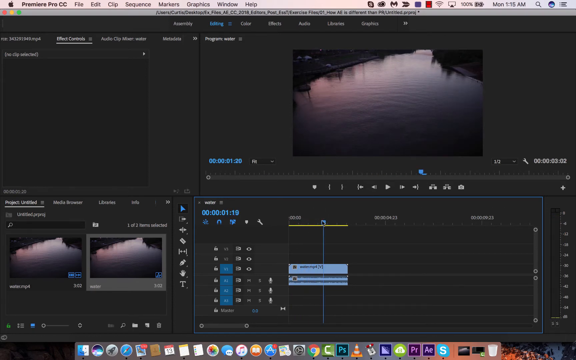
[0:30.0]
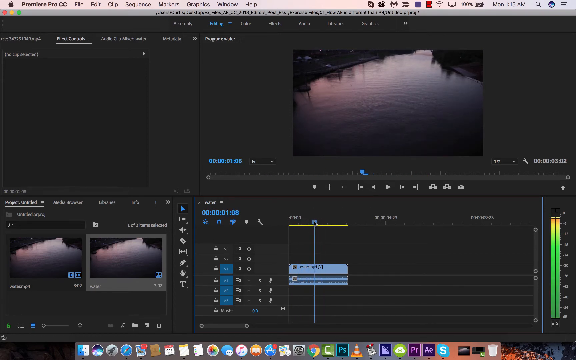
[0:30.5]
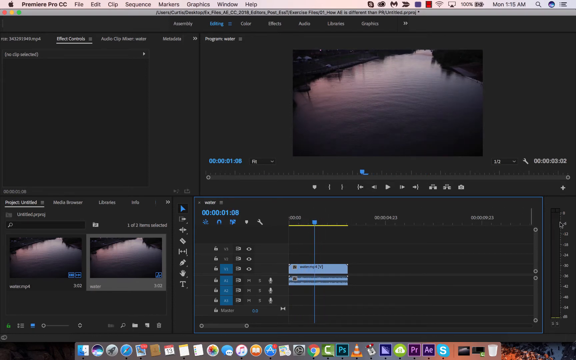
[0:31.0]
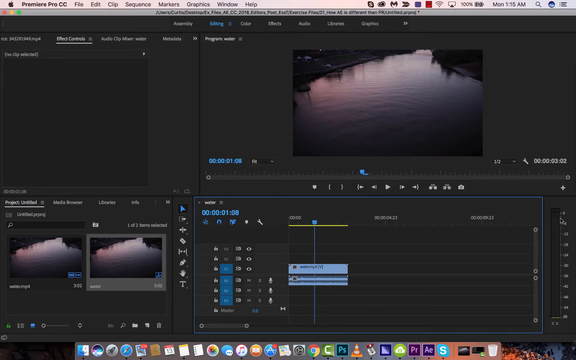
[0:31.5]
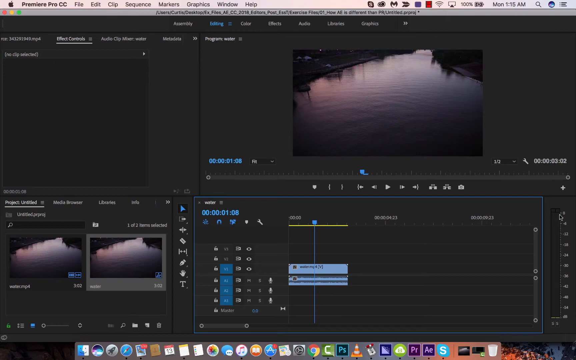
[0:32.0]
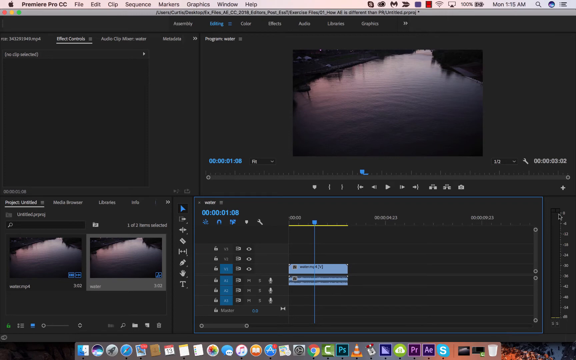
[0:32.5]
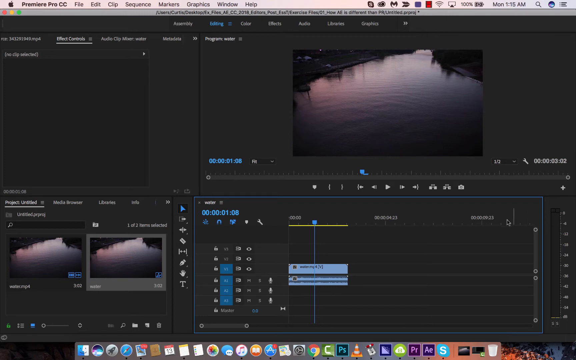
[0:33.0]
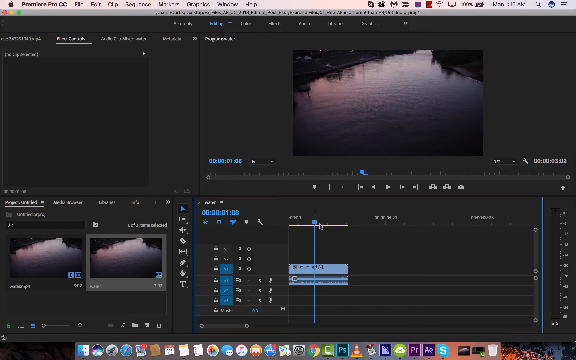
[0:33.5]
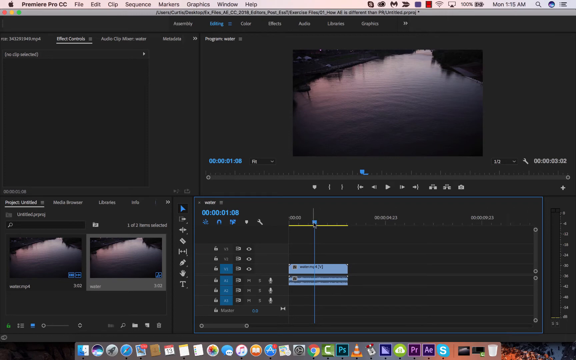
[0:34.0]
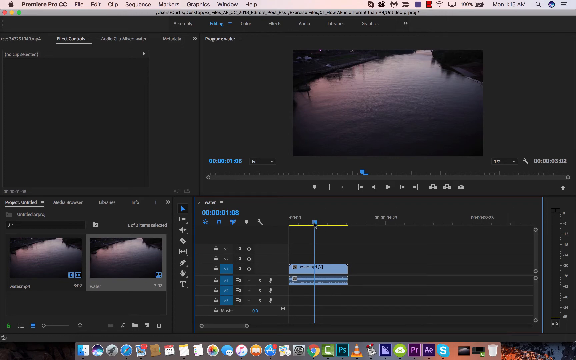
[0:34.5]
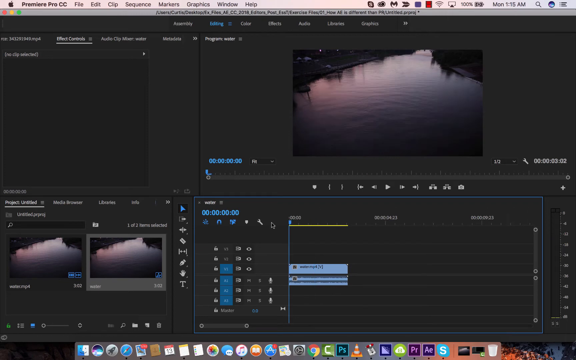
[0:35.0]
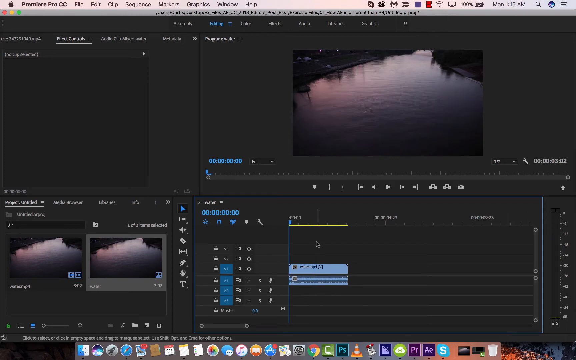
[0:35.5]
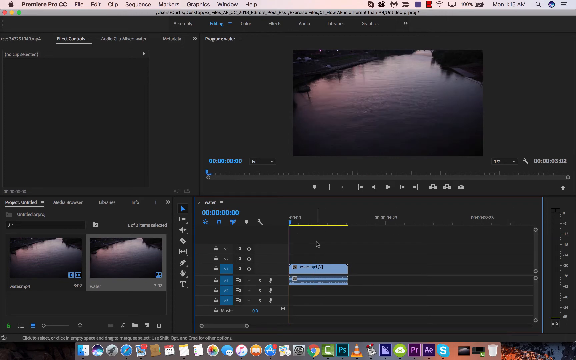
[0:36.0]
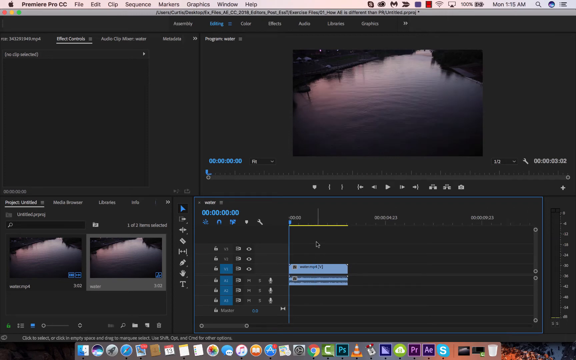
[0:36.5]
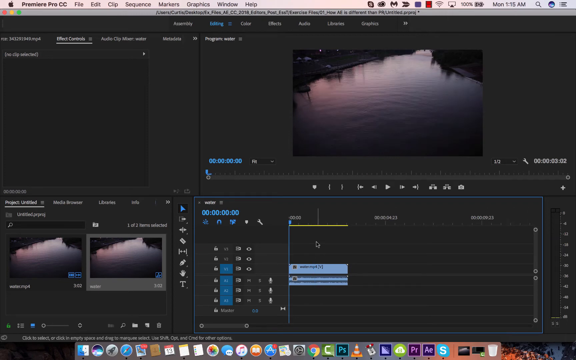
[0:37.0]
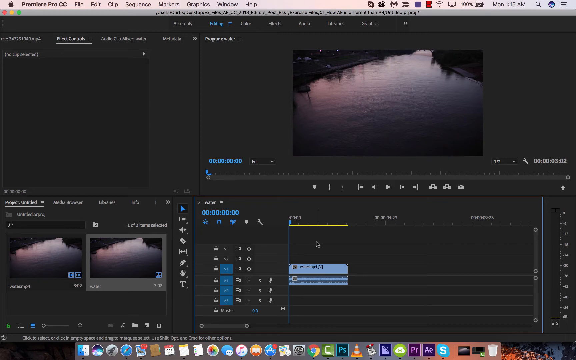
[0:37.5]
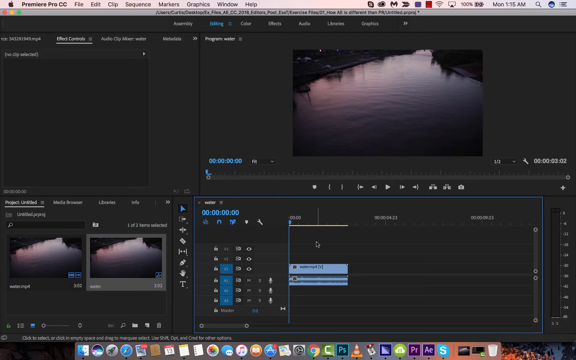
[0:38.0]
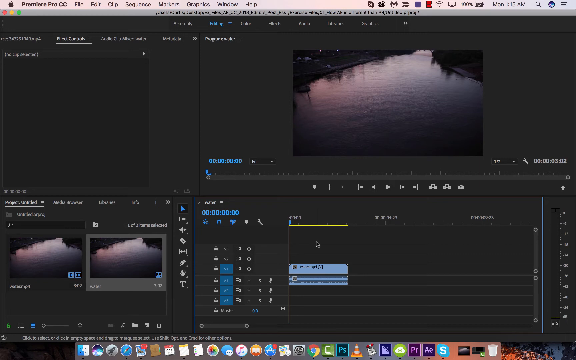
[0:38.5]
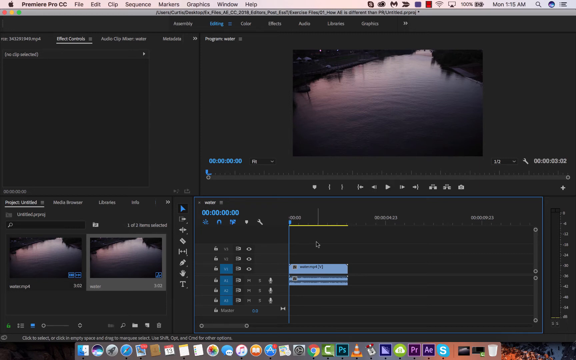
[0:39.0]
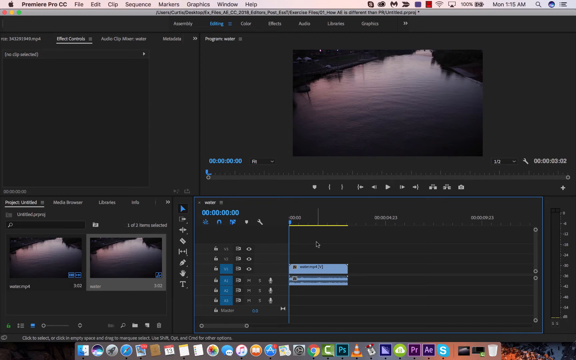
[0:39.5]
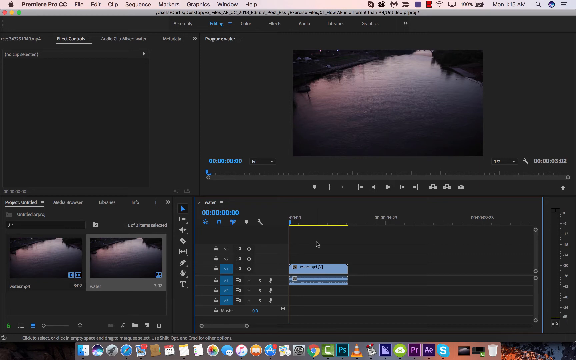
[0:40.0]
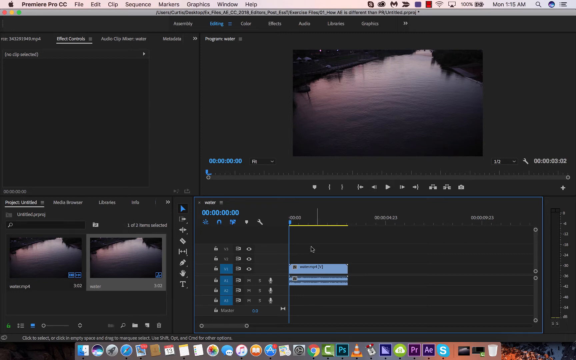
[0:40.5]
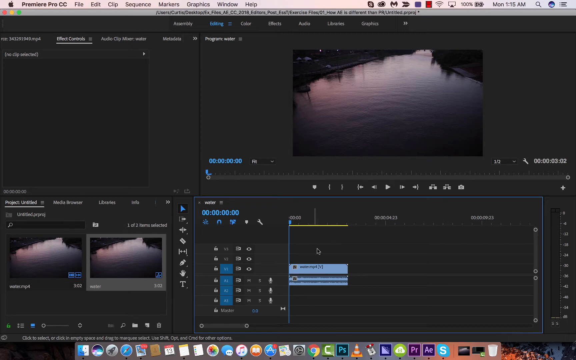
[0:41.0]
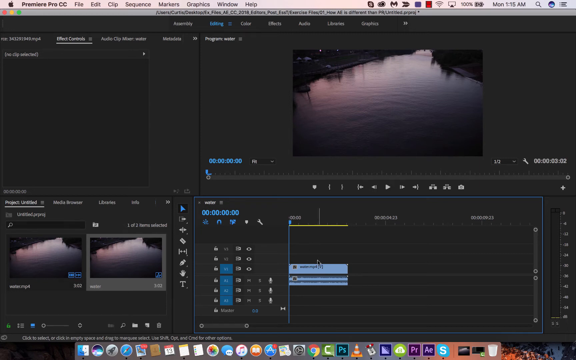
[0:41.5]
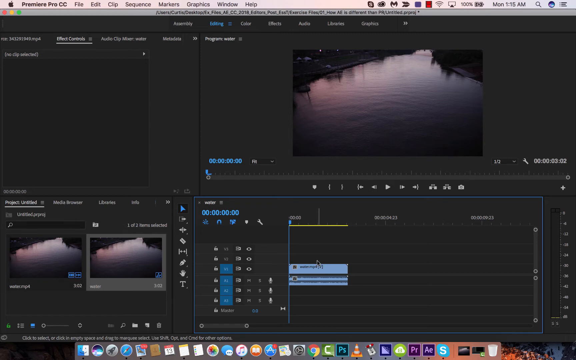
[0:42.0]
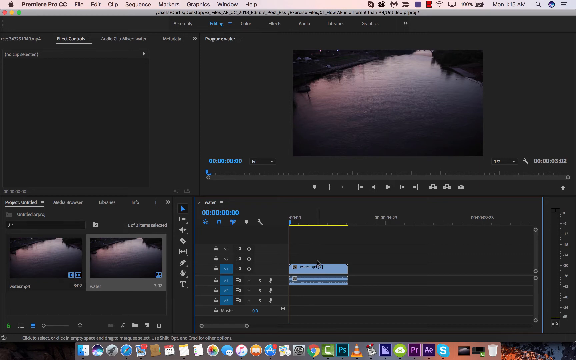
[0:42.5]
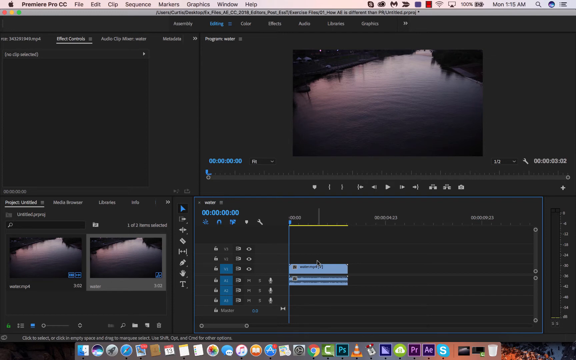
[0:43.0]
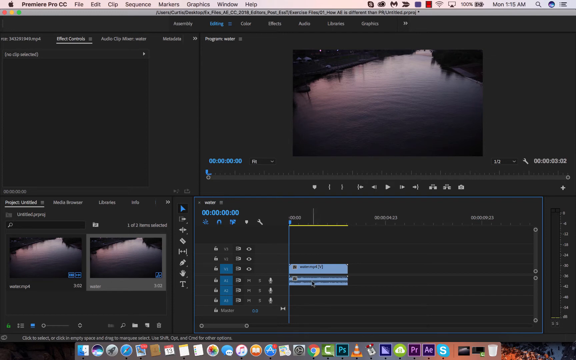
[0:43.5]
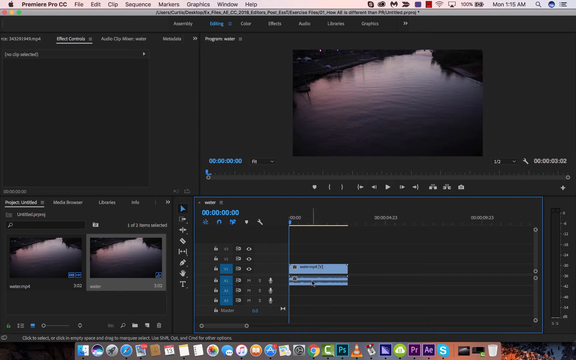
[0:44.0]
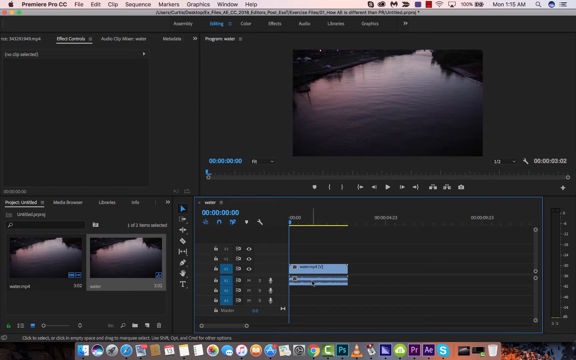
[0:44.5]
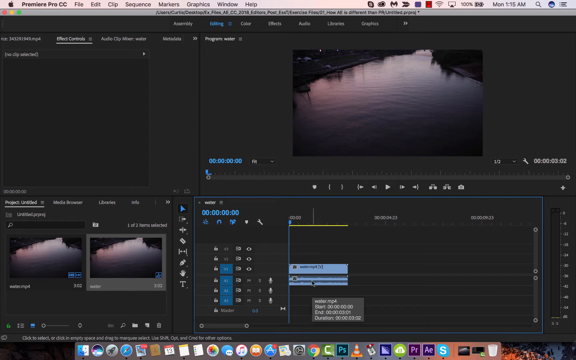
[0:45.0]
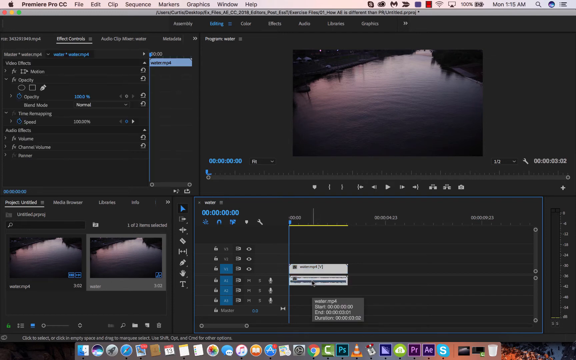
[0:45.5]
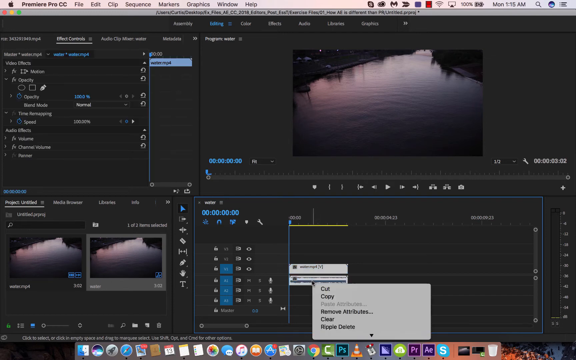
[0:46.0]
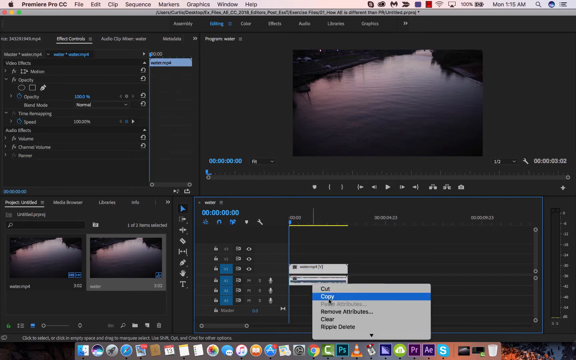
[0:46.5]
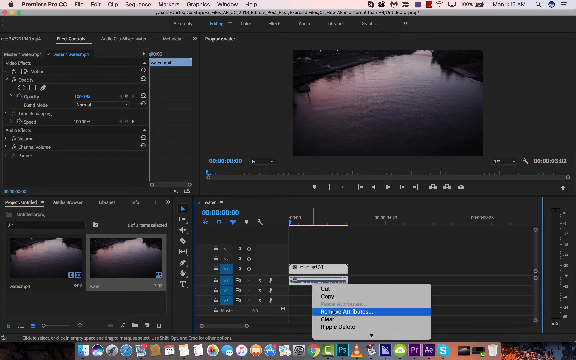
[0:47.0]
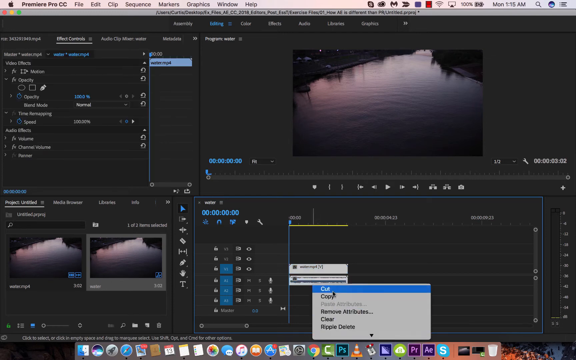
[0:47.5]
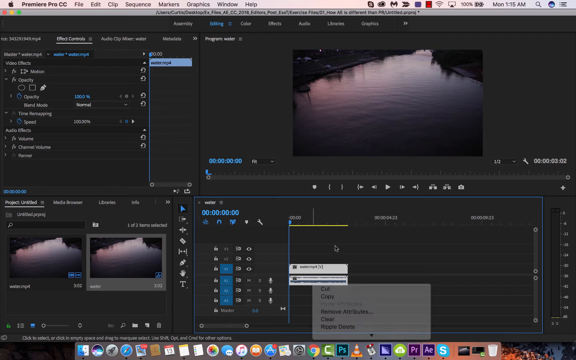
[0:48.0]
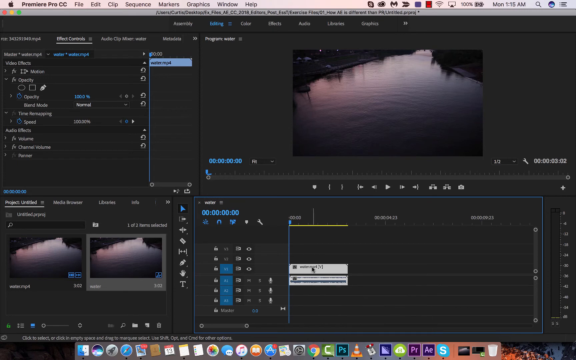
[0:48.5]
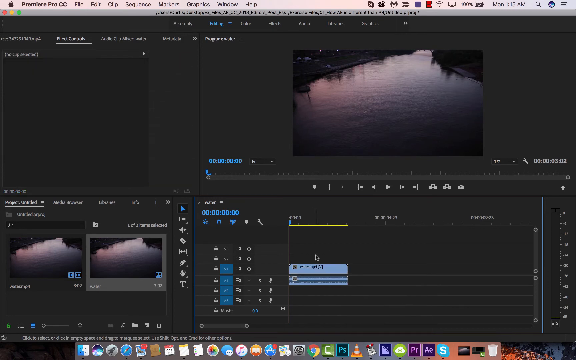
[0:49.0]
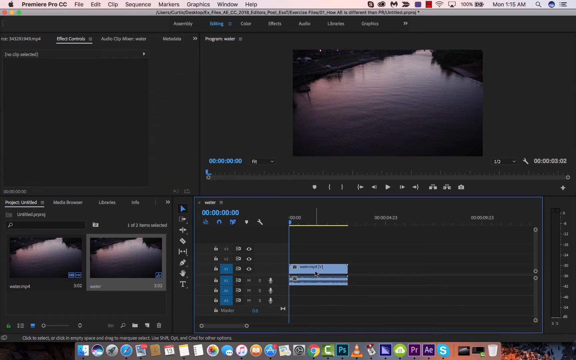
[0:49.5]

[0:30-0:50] The frame is a little wider than it is tall and shows a macOS desktop, with an Apple in the upper left and Premiere Pro to the right of it, followed by the menus File, Edit, Clip, Sequence, Markers, Graphics and Window. To the right is a picture of a lake or river, some body of water, going from a pinkish purple in the upper left to blue in the middle and gray in the lower right. It seems very dark, with reflections of trees that have no leaves, and it appears to maybe be a sunrise or sunset. The lower left holds two copies of the image, and the lower right is workspace. The cursor moves to the right, just below the lake and to its right, then moves back to the left a little. Little evidently happens at first, but then some menus are pulled down in the upper-left third of the screen.